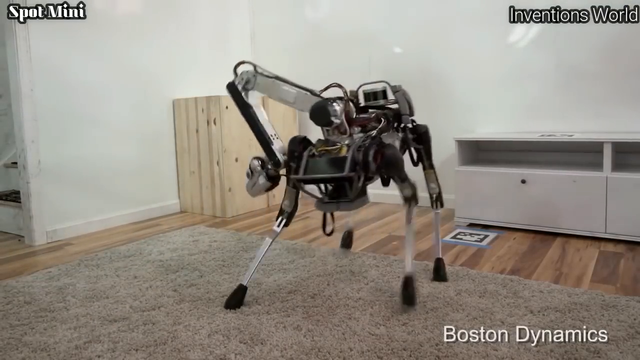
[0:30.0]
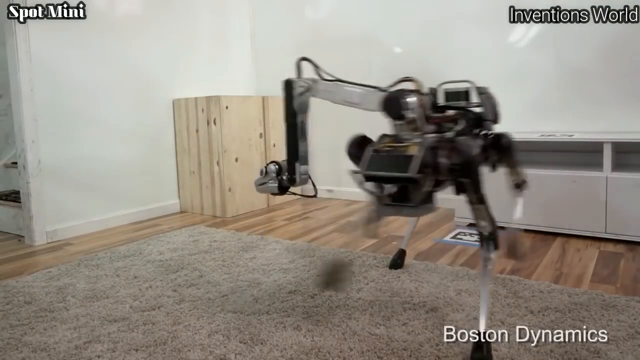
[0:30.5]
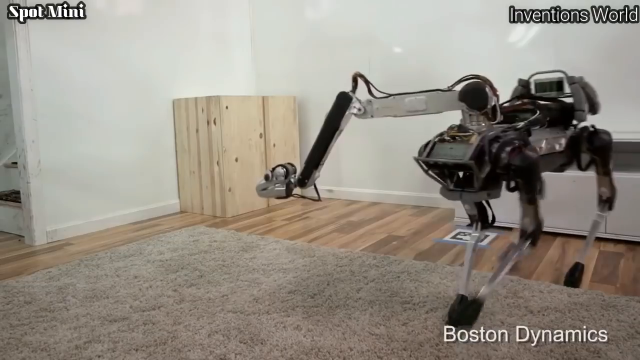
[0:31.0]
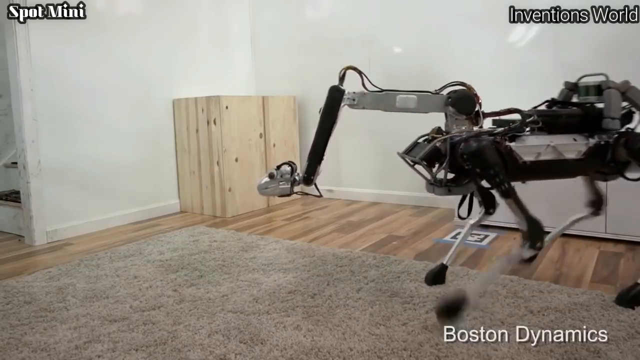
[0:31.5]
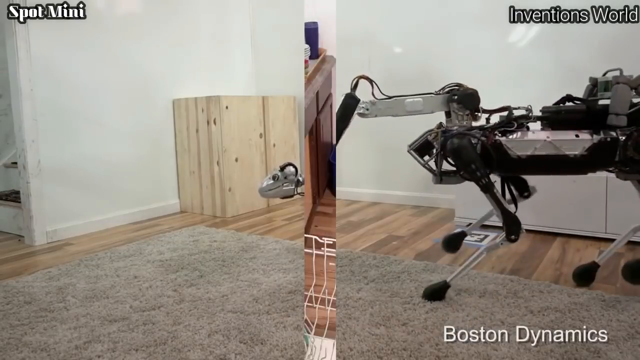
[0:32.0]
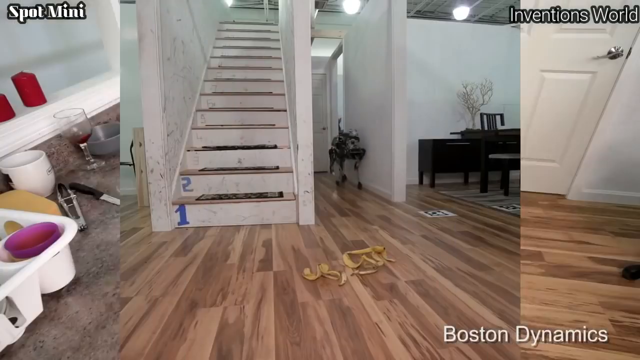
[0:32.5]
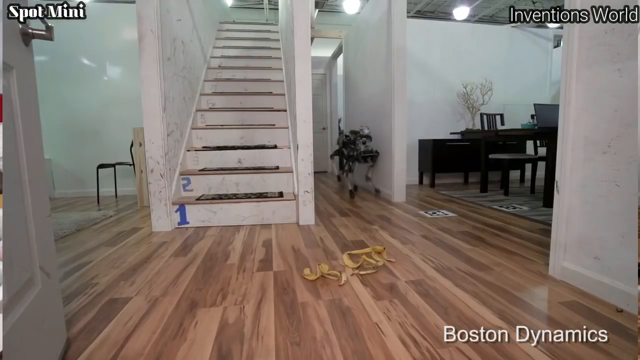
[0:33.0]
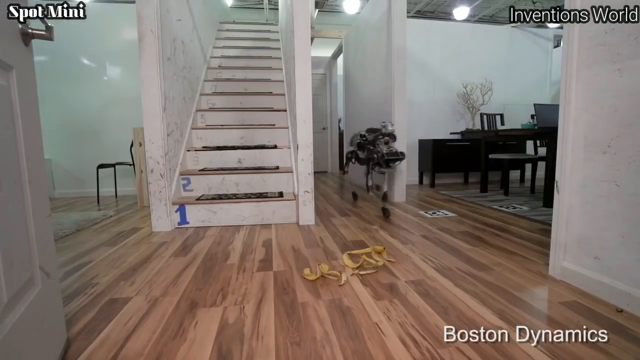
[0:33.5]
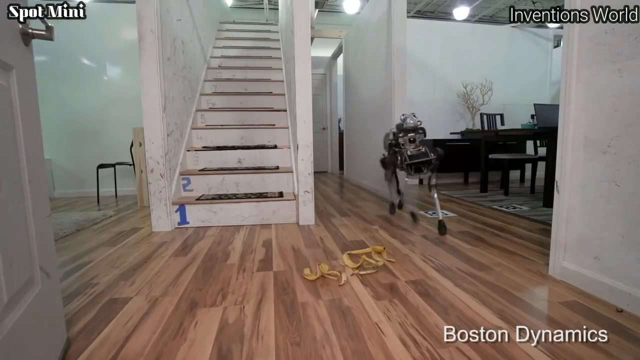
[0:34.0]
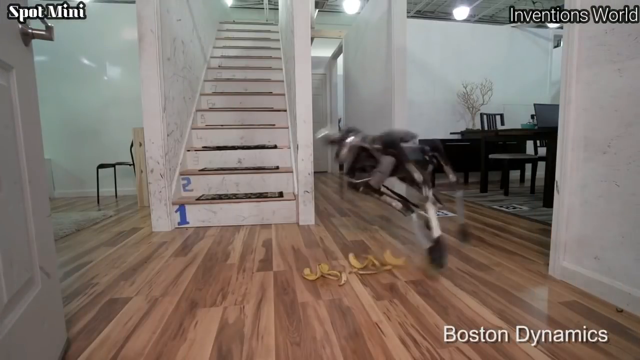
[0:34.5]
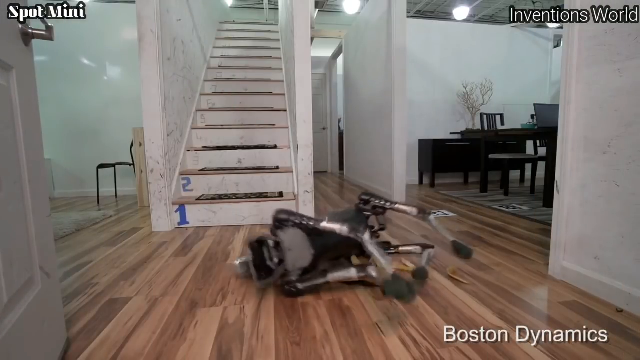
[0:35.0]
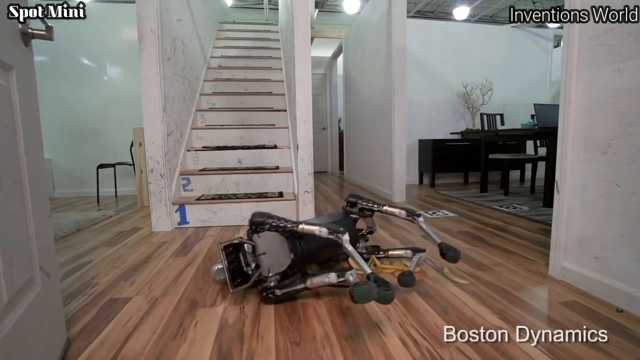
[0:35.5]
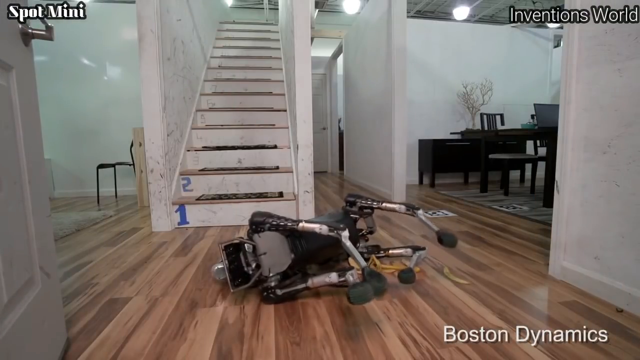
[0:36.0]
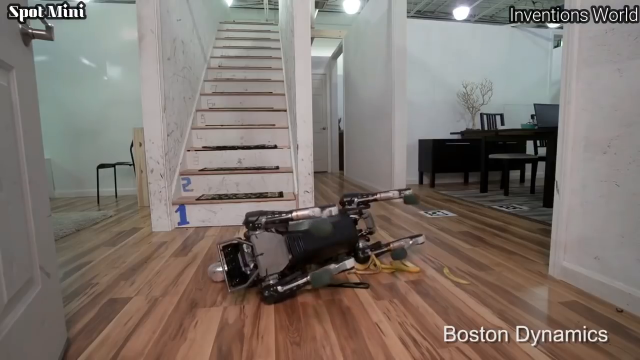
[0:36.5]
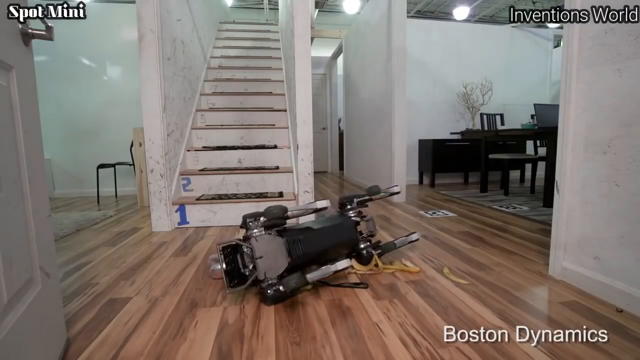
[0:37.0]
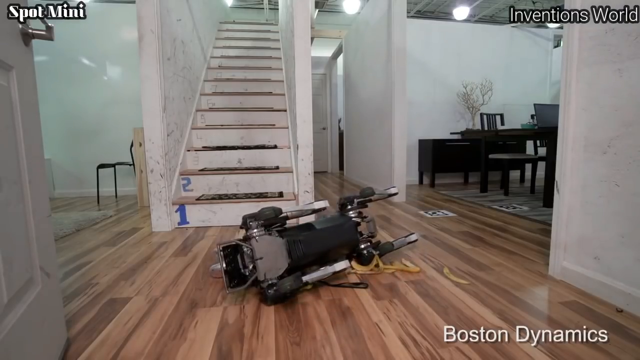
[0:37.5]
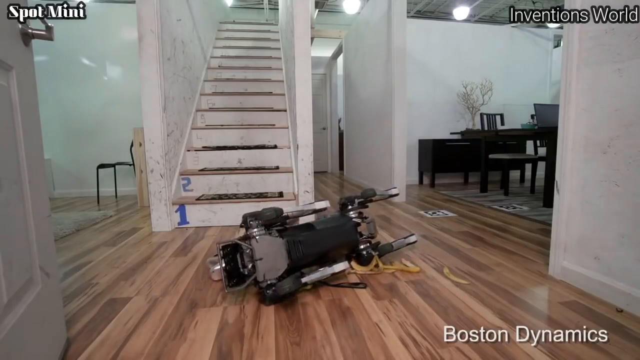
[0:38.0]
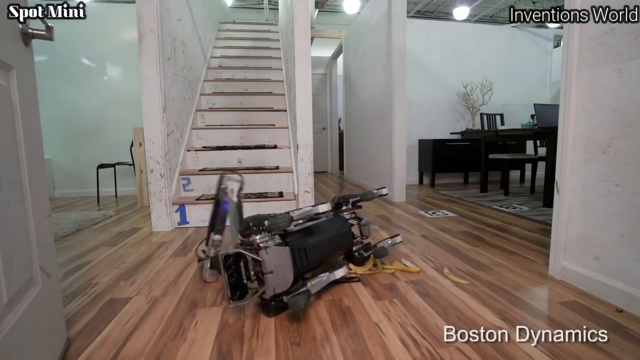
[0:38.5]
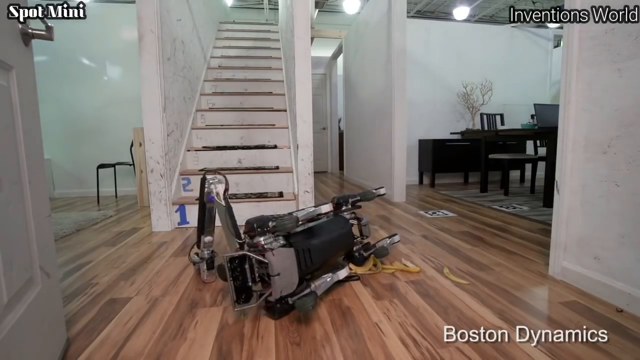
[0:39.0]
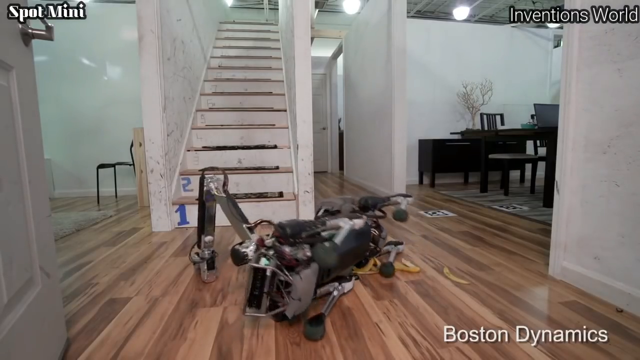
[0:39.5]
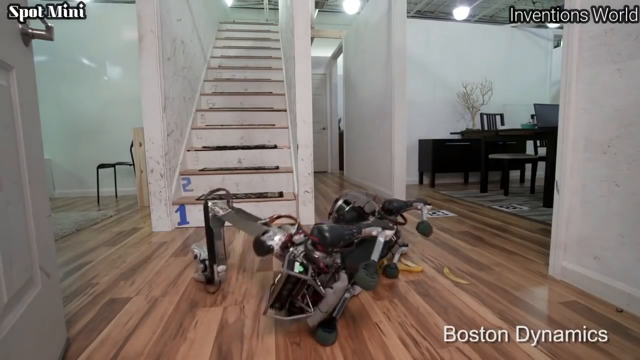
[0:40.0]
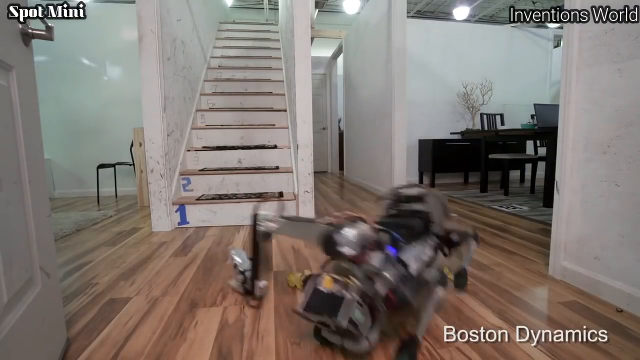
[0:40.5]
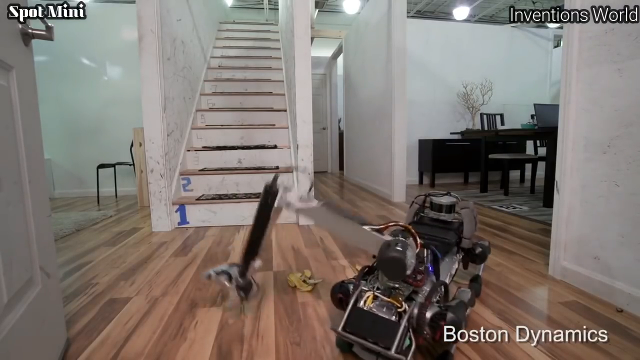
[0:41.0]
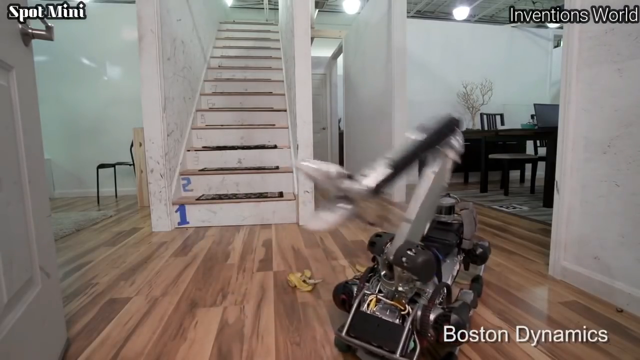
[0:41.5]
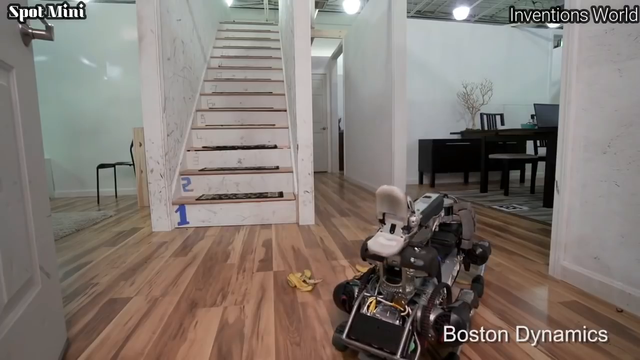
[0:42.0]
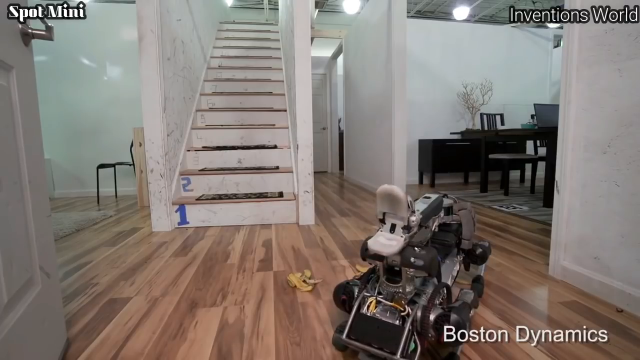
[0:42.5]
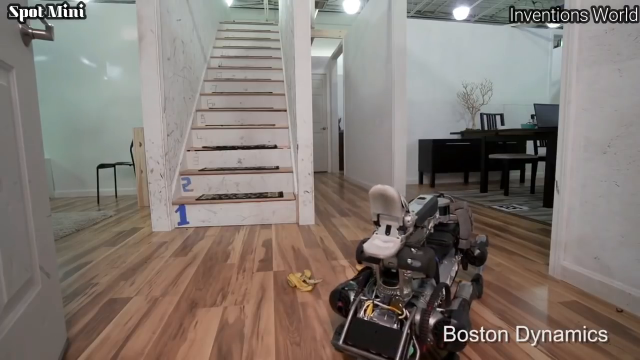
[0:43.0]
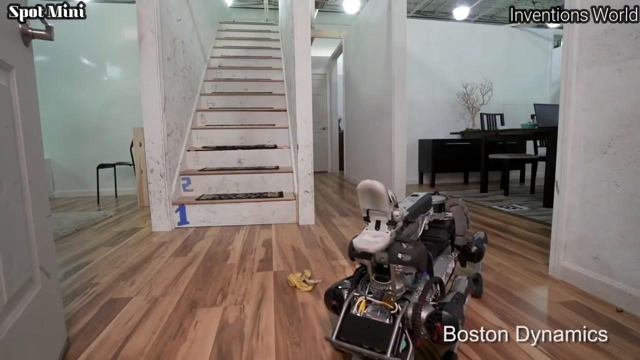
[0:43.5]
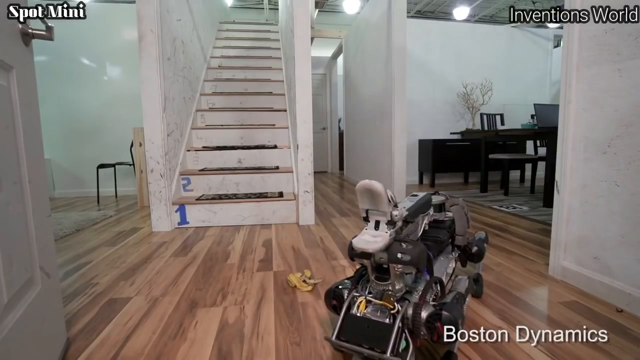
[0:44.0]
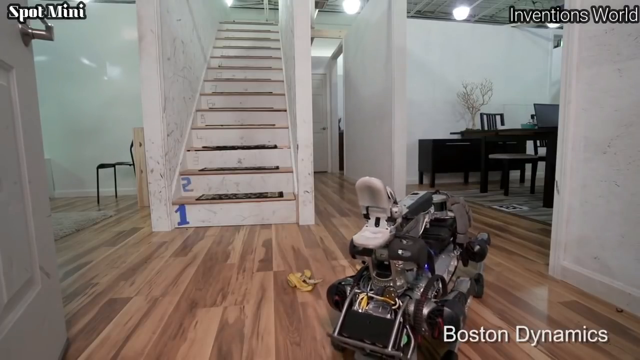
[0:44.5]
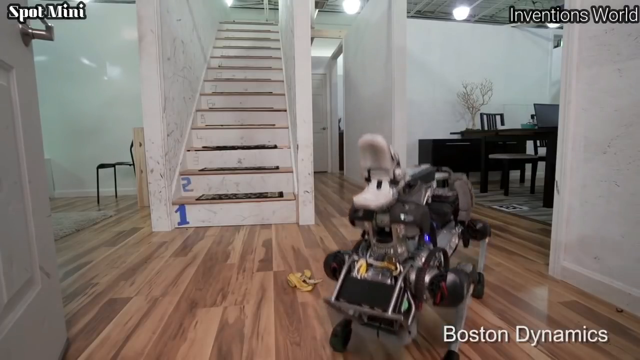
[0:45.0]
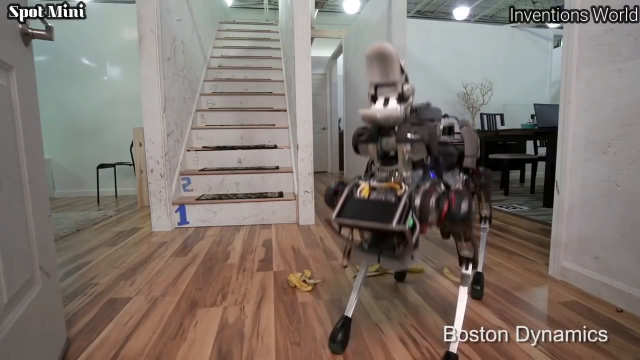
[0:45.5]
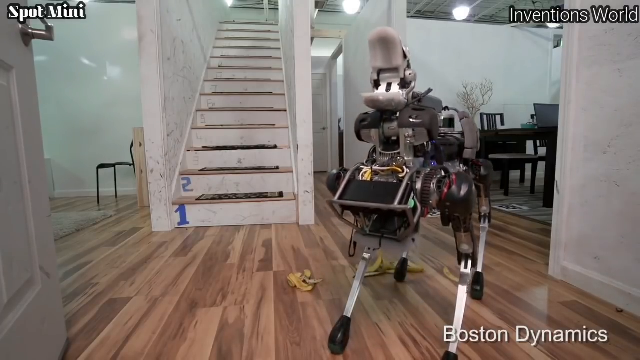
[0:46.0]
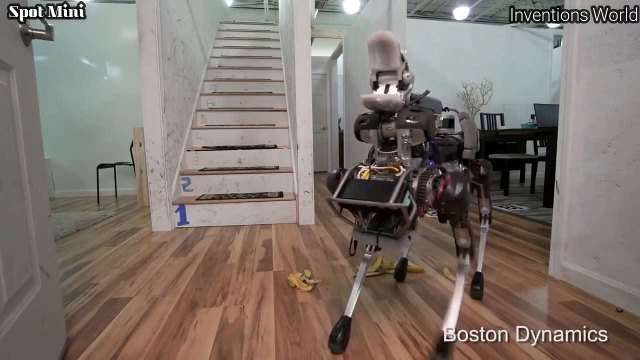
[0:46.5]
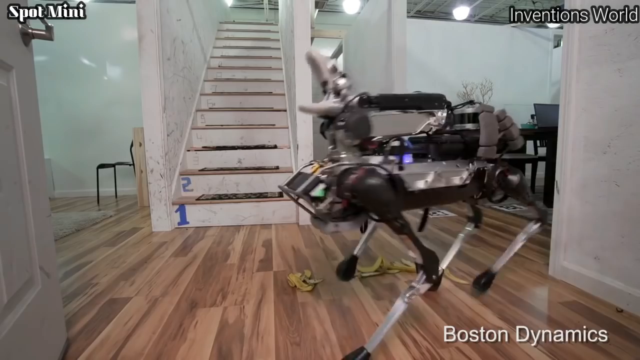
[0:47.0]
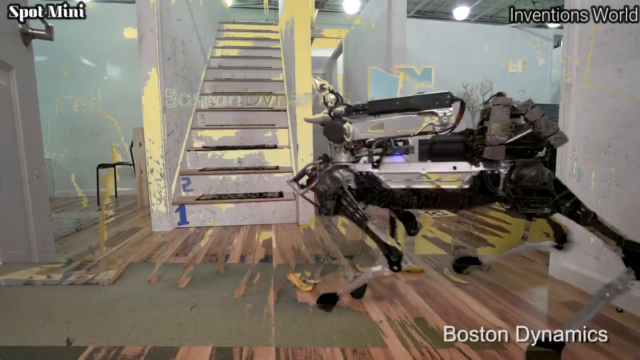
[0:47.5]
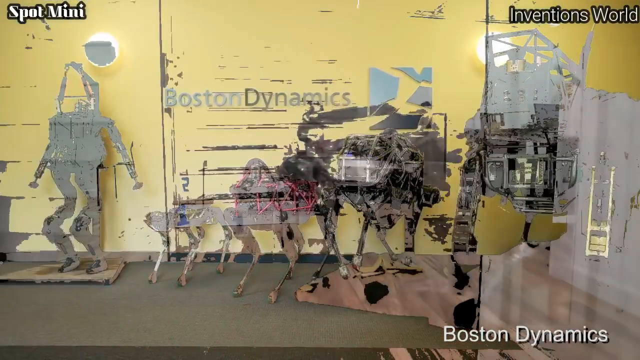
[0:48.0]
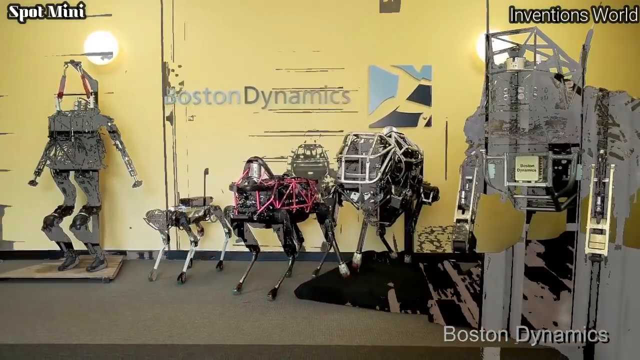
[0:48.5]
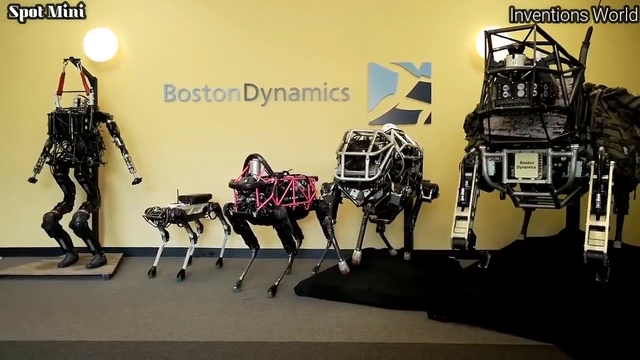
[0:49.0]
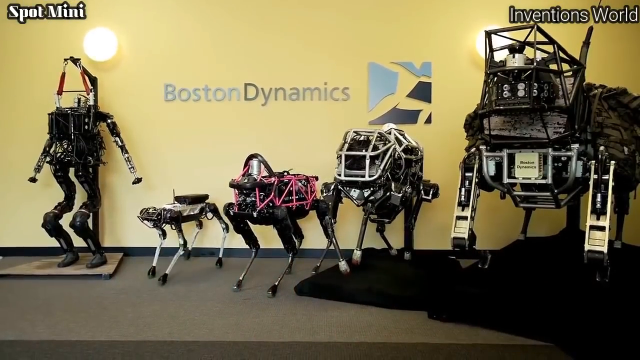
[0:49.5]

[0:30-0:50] The robot moves backwards, demonstrating how its head stays in place. It then comes walking around a corner in a different part of the house, at the bottom of a flight of stairs going upward. Two rooms are visible to the left and right; the right one appears to have black furniture and tables and a little tree, while the left one has just a little chair and a rug, though it is kind of hard to see. The robot walks down a hallway between the stairs and the right room, where a door is visible far away and a little room is off to the right that the robot apparently came from. It walks over what appear to be banana peels, slips, and falls over on its side. It then curls its little legs upward and uses its head to push itself up and pivot back onto its legs. The whole time its head is kind of open, looking like a little mouth, which it apparently uses as a leveraging point. After setting itself back upright, it leaves its head open and kind of curled up on its back.